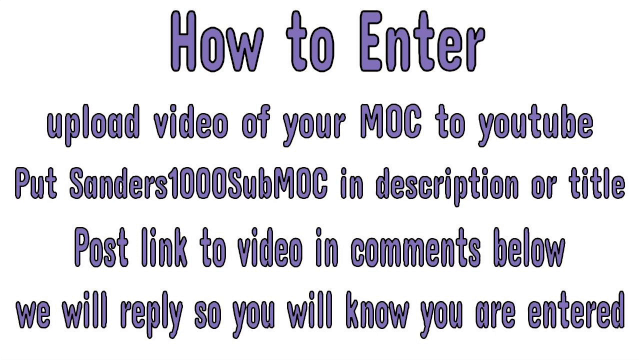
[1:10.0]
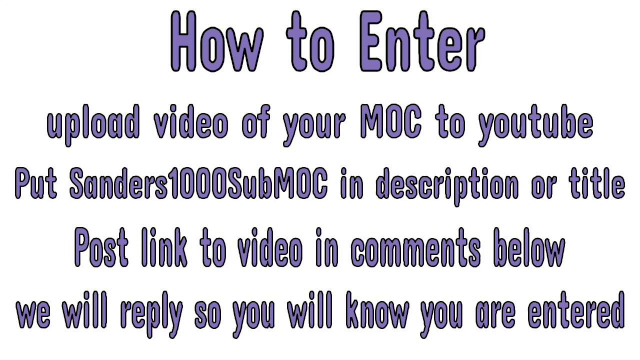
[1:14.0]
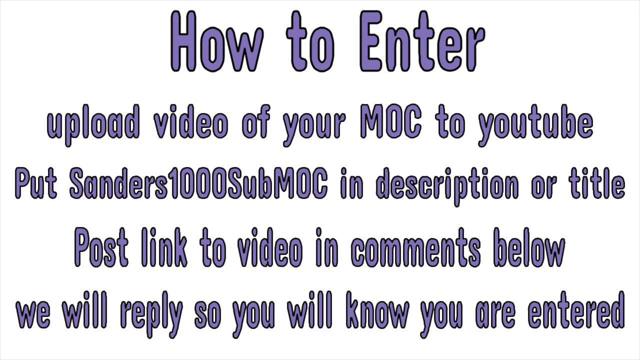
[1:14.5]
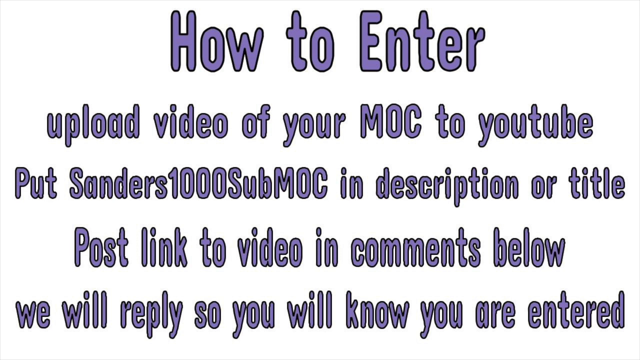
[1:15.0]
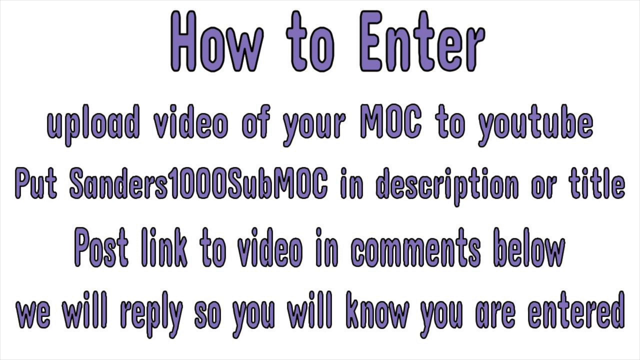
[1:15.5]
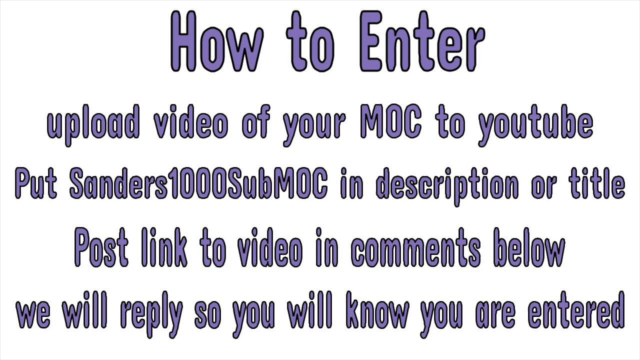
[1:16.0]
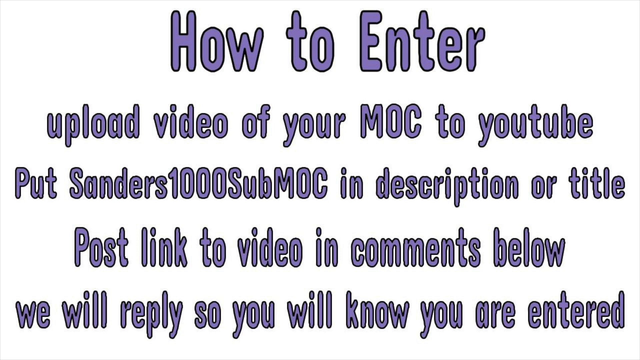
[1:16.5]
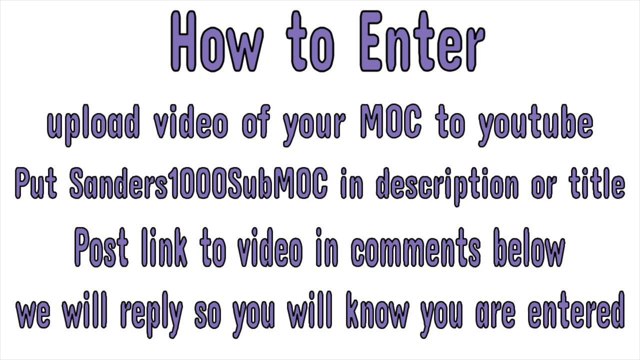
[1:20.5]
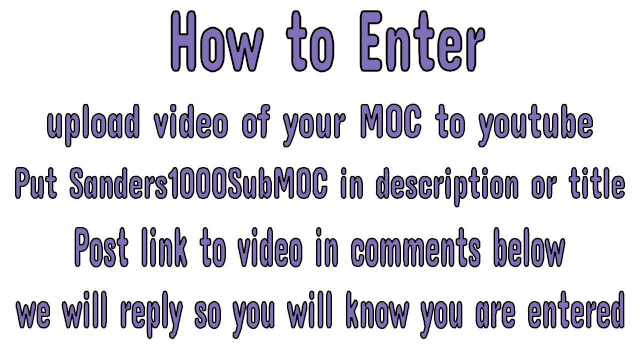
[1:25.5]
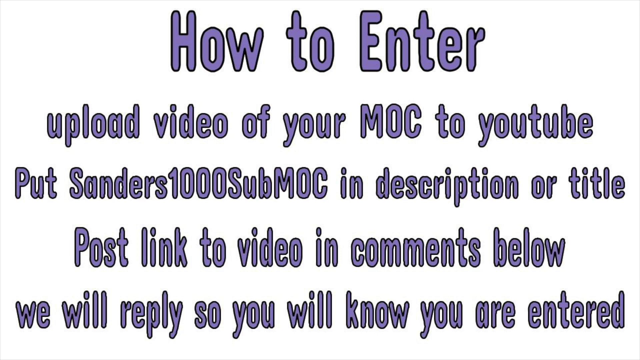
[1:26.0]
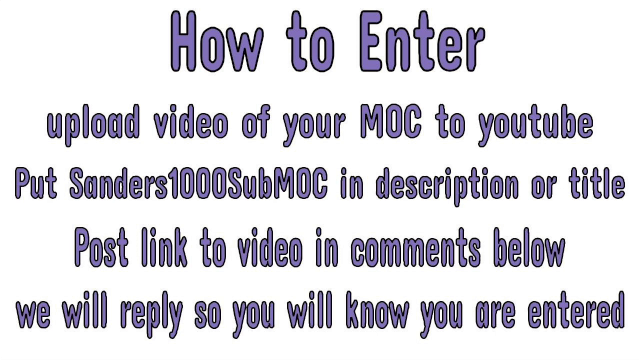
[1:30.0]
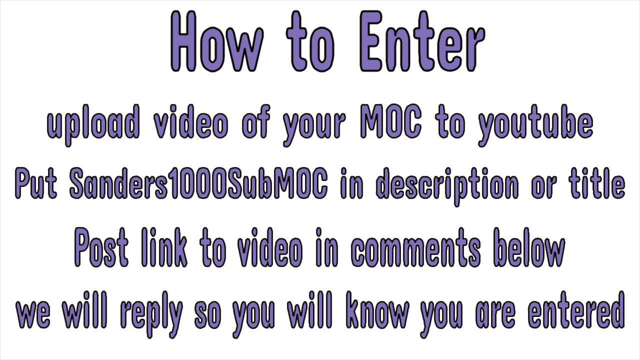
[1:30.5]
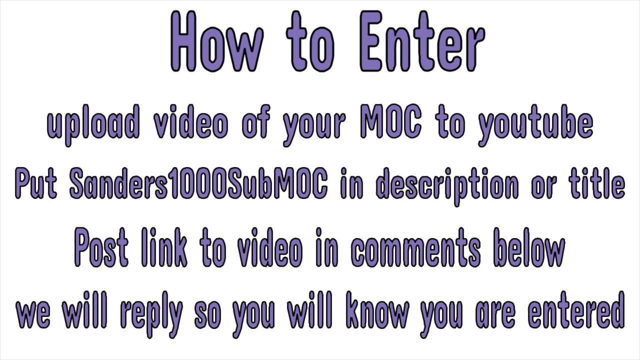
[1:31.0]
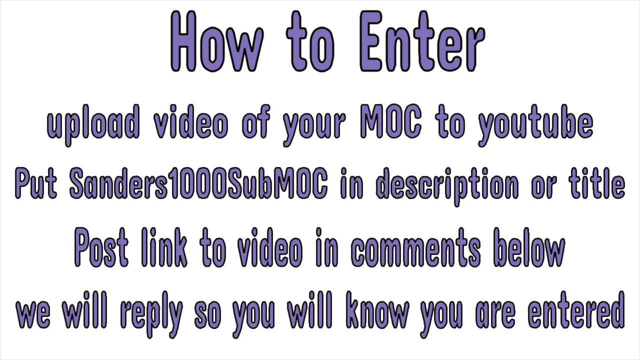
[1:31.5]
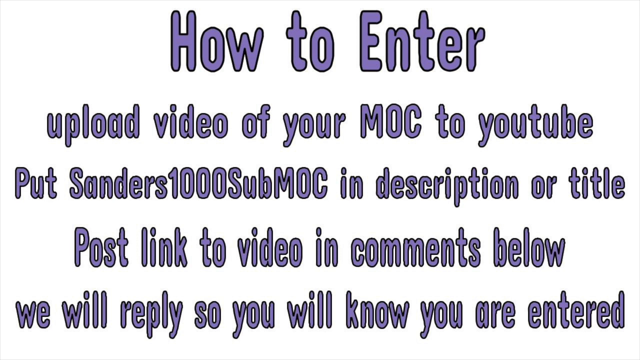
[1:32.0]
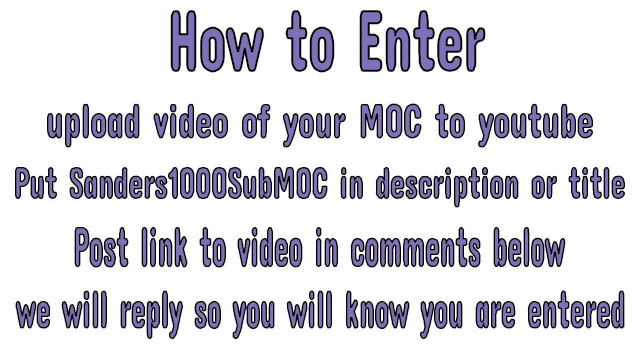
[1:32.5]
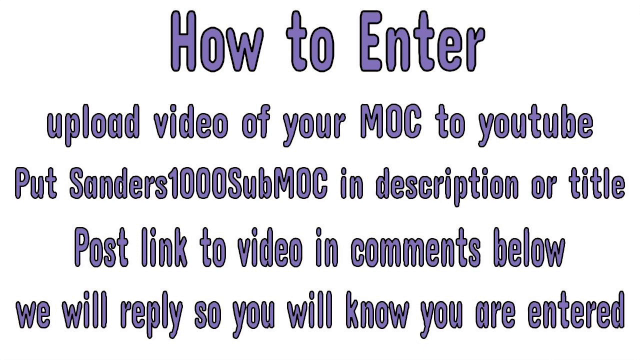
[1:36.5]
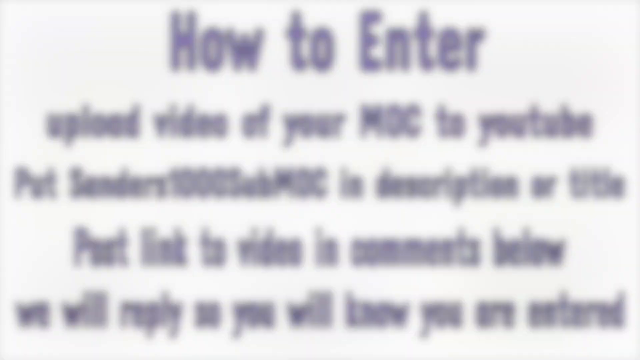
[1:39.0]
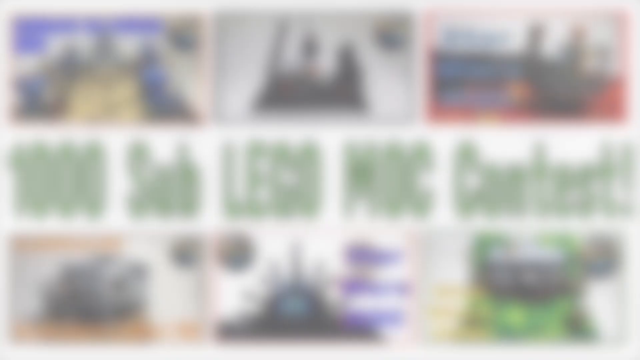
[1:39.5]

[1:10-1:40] The how-to-enter text continues on screen: "upload your video of MOC to YouTube put Sanders 1000 sub MOC in description or title post a link to the video in the comments below we will reply so you will know you are entered." The text is a light bluish-purple color on a white backdrop. The page is very basic and plain, with little color, and is informational. There are no periods, and some words are capitalized while others are not, so what seems to be a couple of sentences looks like one run-on statement; where each line starts a new topic, the first letter is not capitalized.